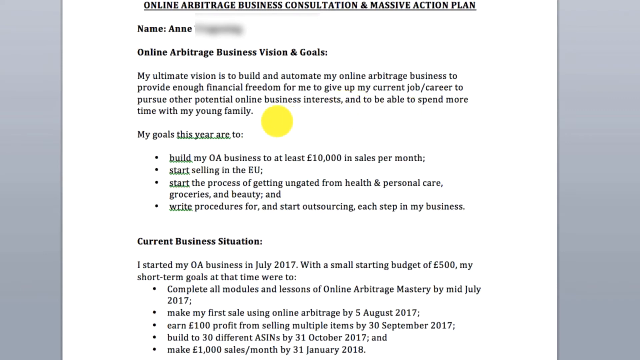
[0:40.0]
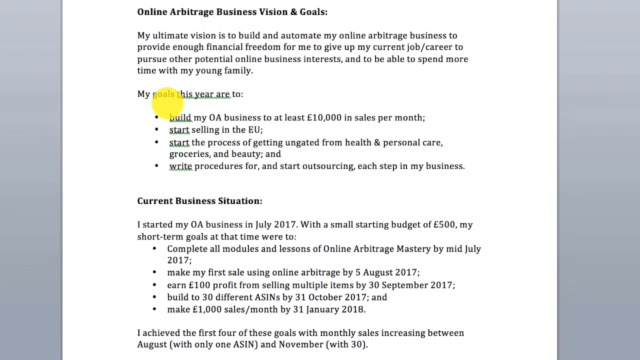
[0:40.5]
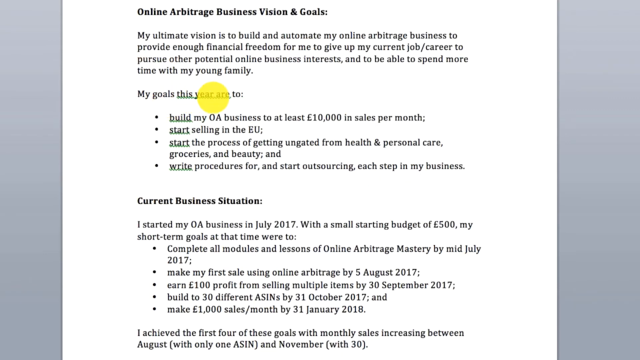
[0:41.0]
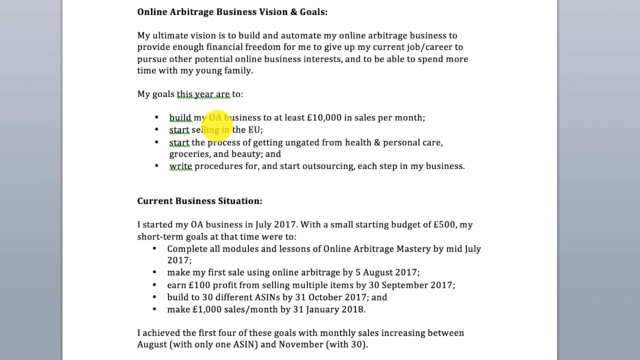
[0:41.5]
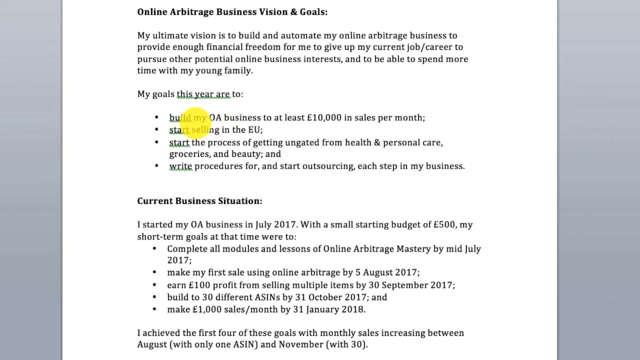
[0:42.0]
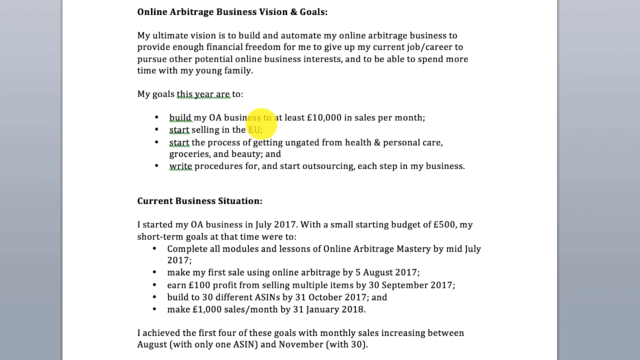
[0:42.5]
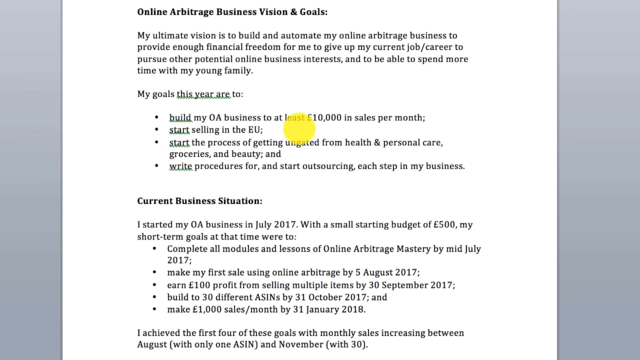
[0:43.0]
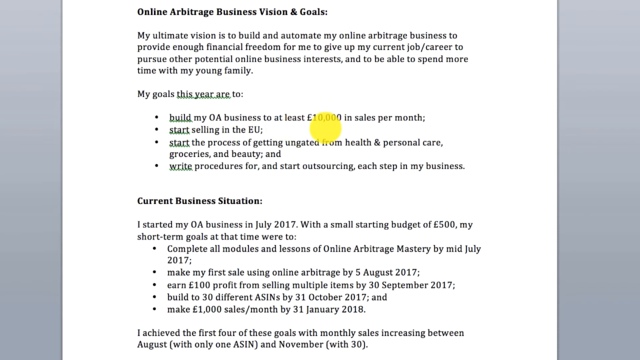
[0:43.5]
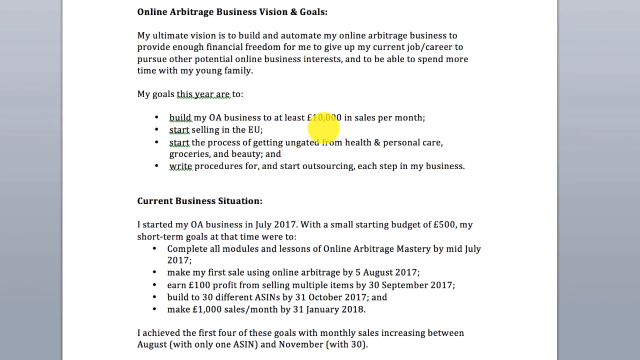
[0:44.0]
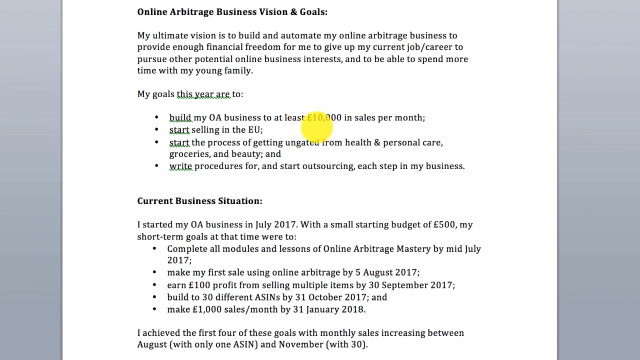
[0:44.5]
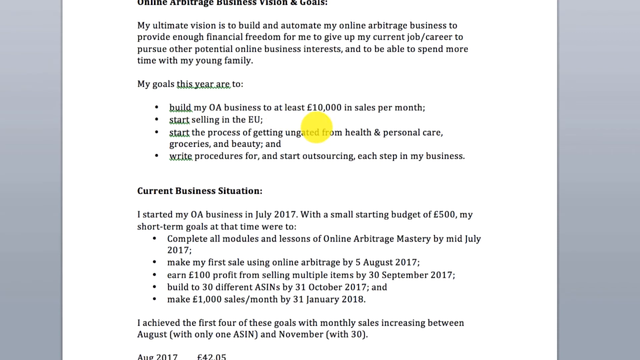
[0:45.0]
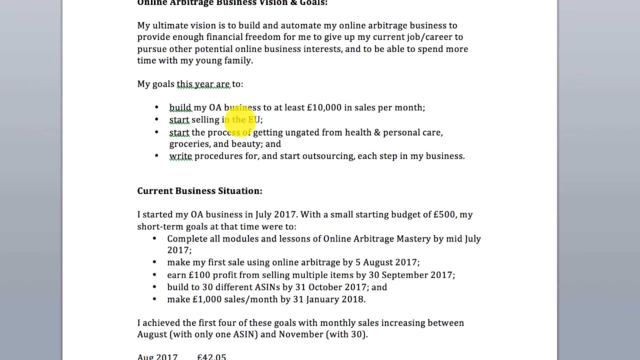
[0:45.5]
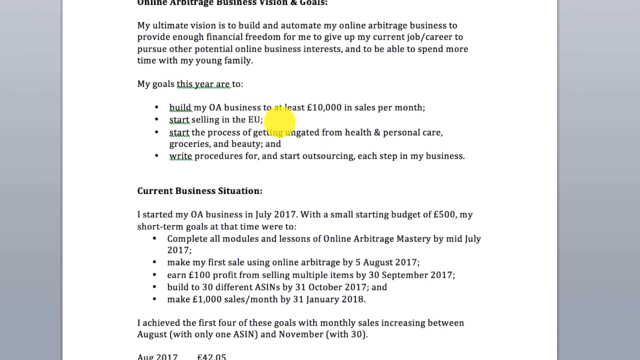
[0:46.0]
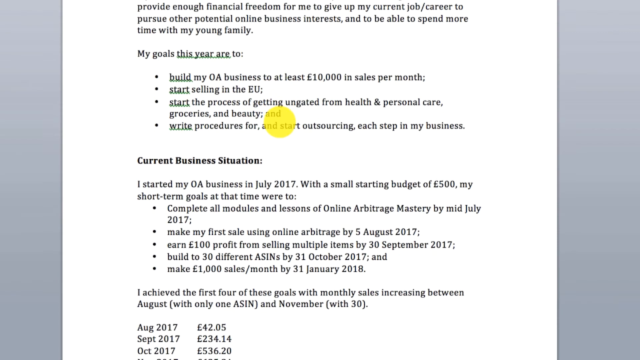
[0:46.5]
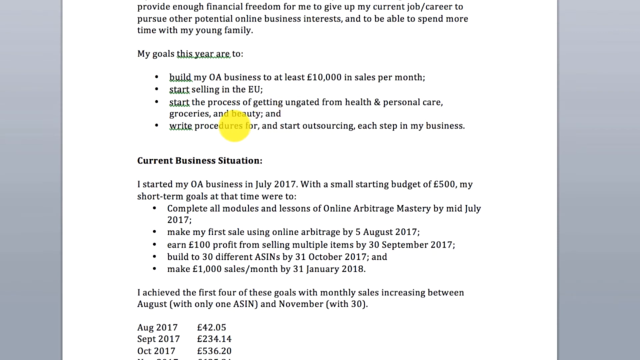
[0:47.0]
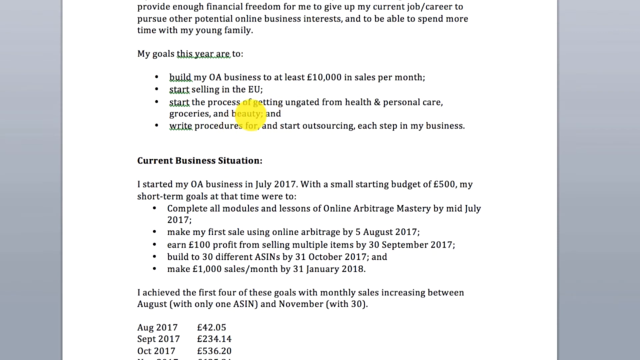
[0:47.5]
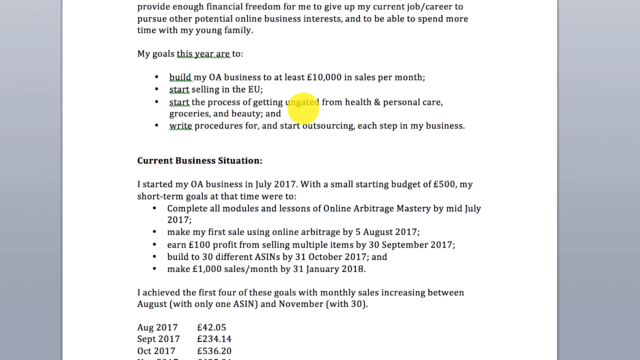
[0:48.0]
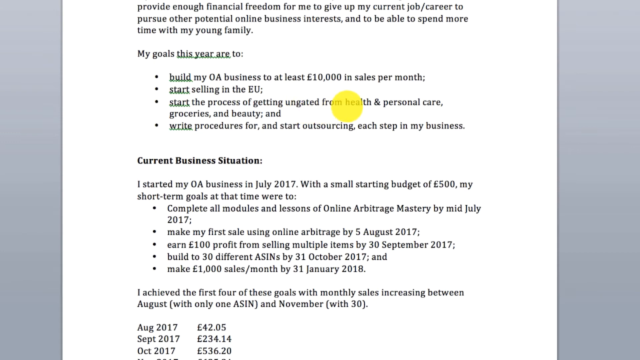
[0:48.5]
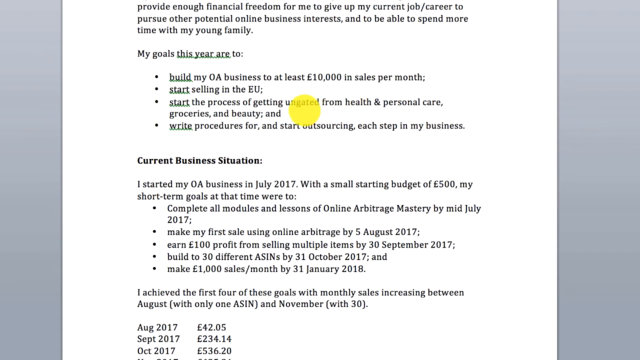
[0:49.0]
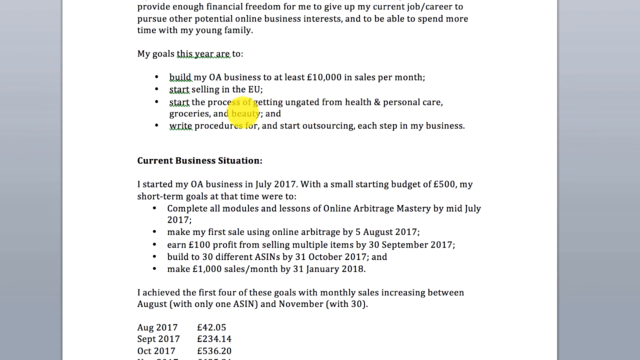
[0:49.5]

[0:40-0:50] The Word document with the yellow cursor is on screen. The document scrolls down as the cursor moves along, apparently reading the document, going across every single line. It goes line by line through the goals for the online arbitrage business and stops at the last goal.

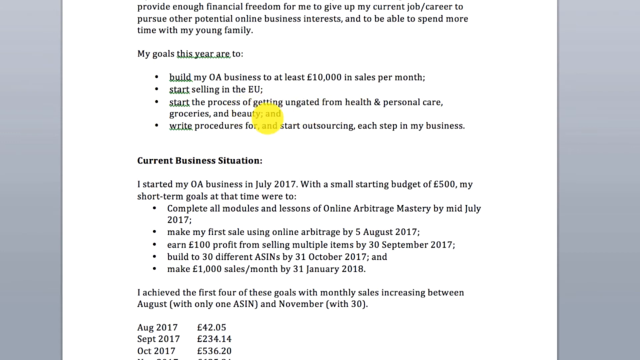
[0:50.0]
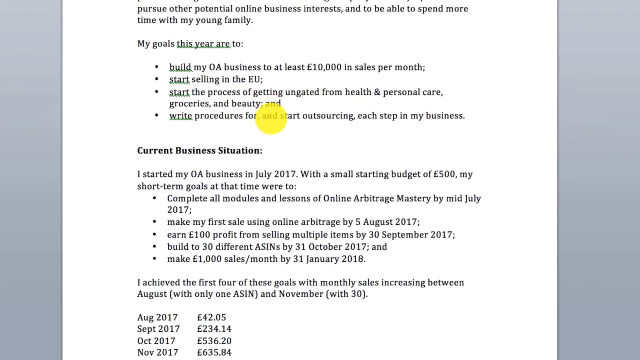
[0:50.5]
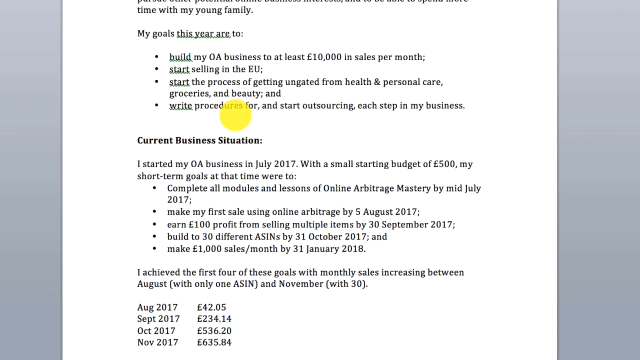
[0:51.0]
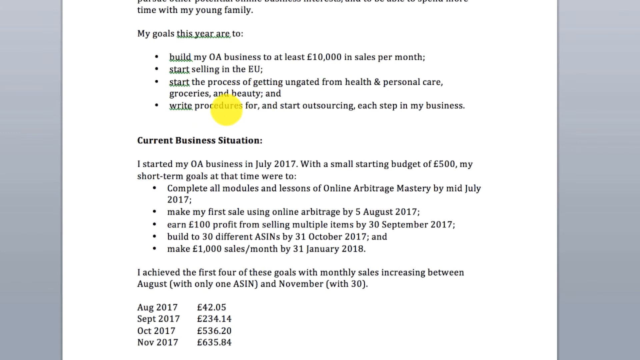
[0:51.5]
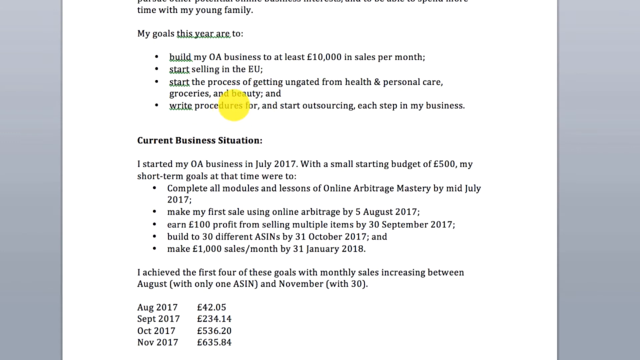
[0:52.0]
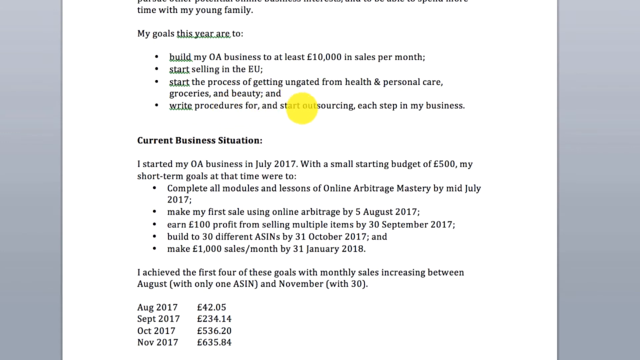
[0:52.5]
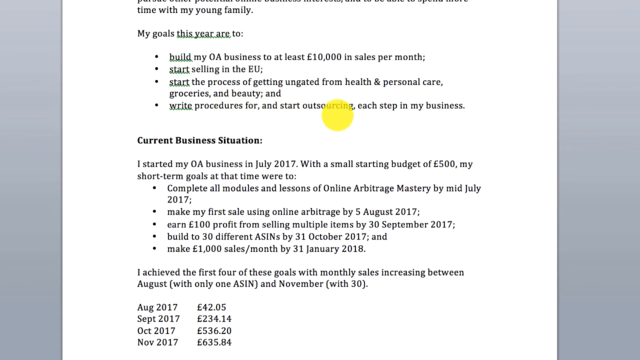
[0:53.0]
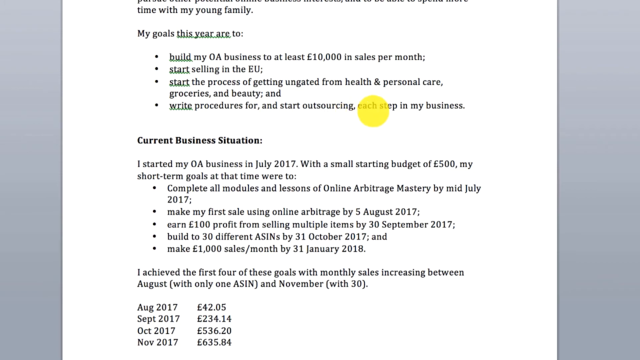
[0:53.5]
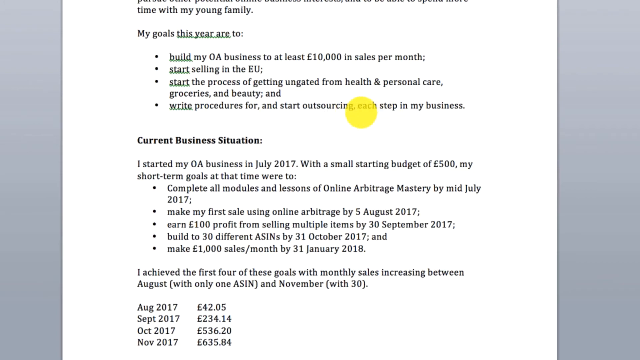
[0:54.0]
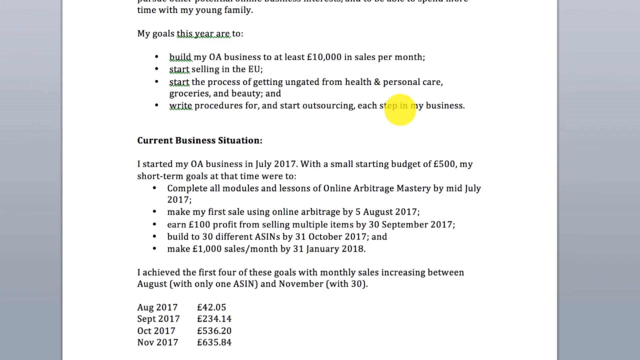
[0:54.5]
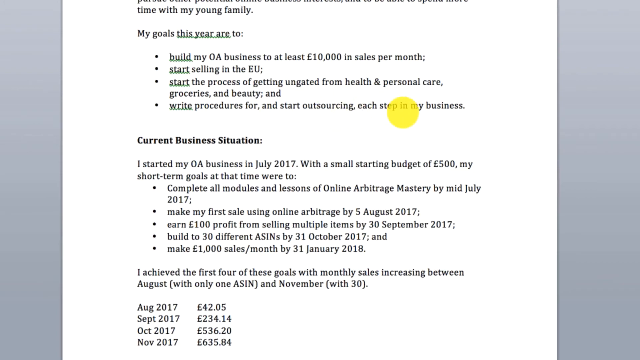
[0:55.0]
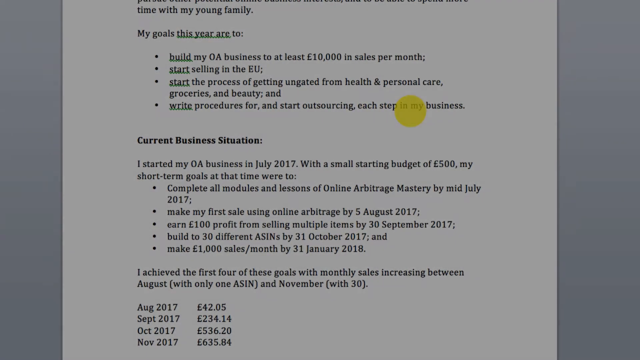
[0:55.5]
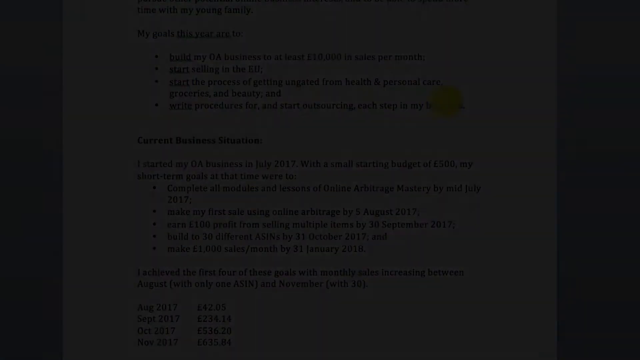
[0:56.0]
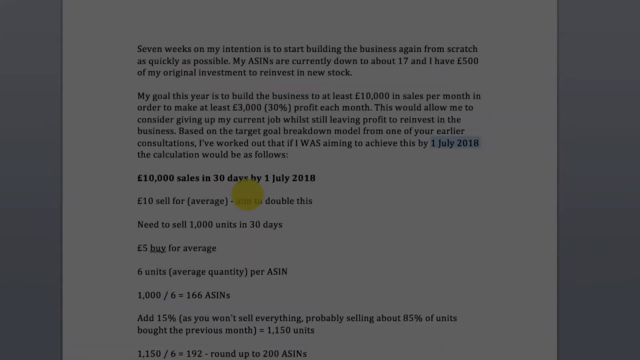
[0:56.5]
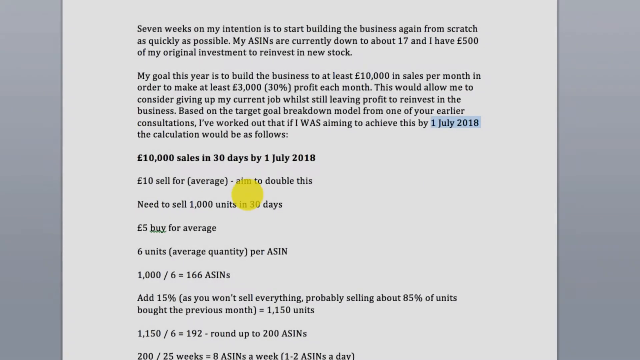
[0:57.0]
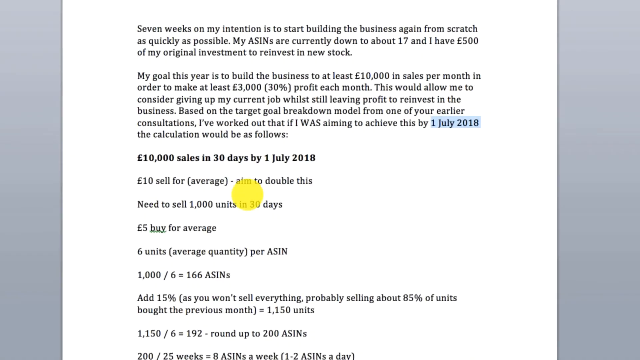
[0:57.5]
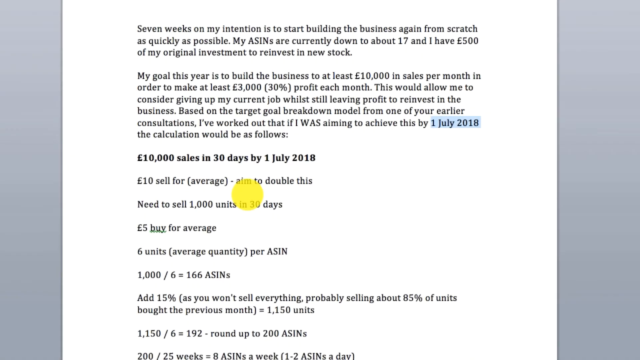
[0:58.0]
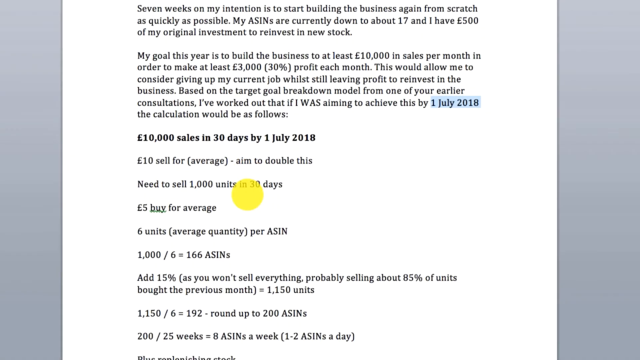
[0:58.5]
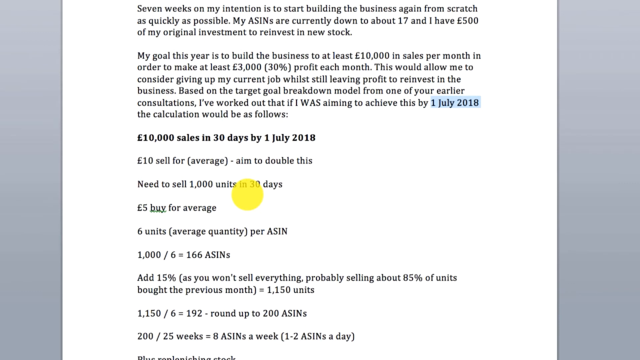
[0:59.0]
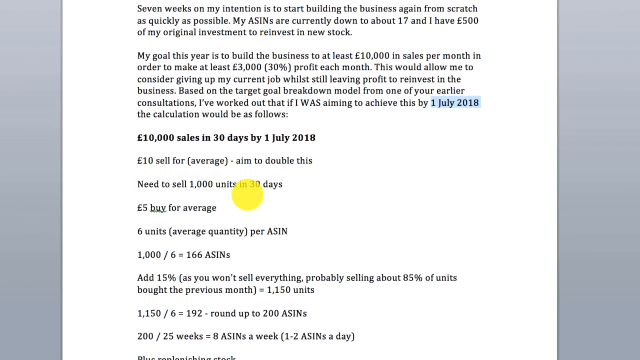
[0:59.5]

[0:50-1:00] The yellow cursor moves along the Word document, still on the last bullet point of the goals, as the document scrolls. The Word document then dissolves into another Word document that is not titled; it is unclear whether it is the same document or a separate one. It scrolls down, and among the statements is a bold statement about 10,000 pounds in sales in 30 days by July 1. The content possibly is notes from the goals. The video then abruptly cuts off.